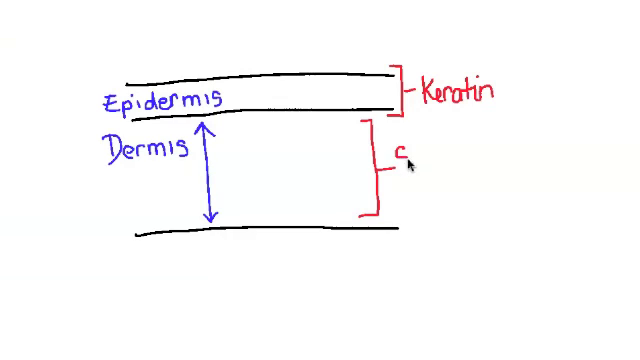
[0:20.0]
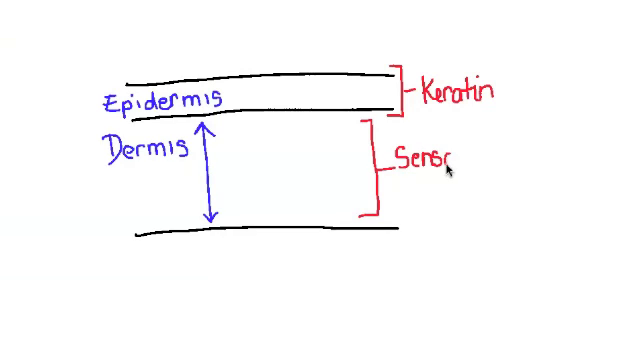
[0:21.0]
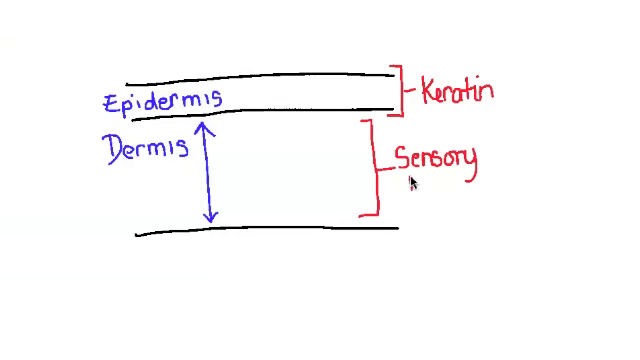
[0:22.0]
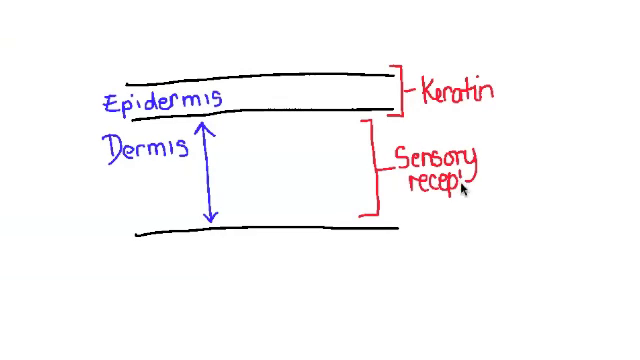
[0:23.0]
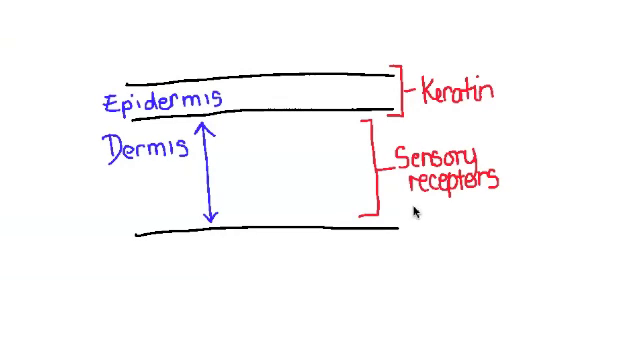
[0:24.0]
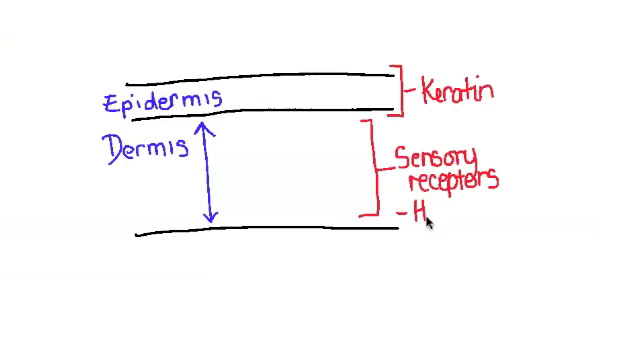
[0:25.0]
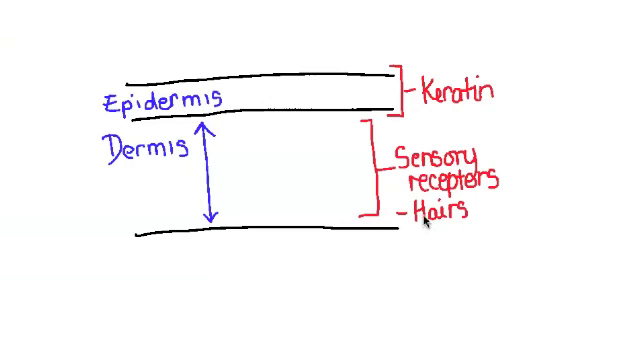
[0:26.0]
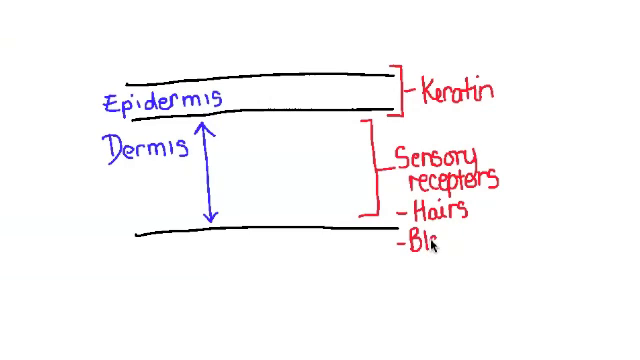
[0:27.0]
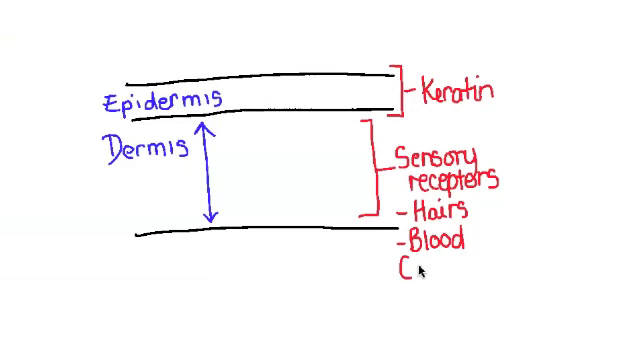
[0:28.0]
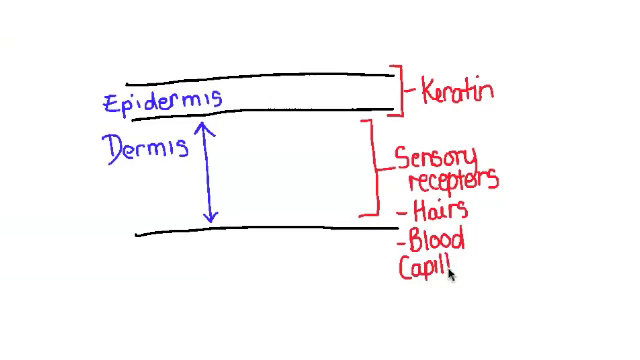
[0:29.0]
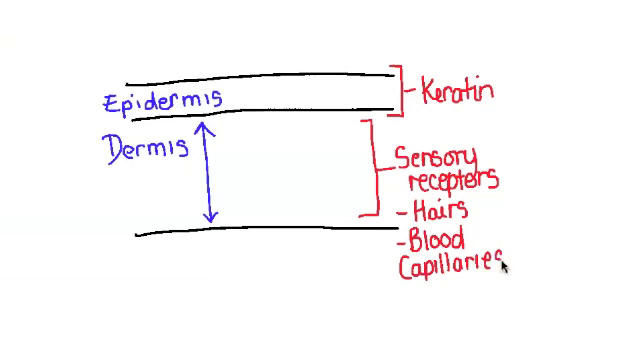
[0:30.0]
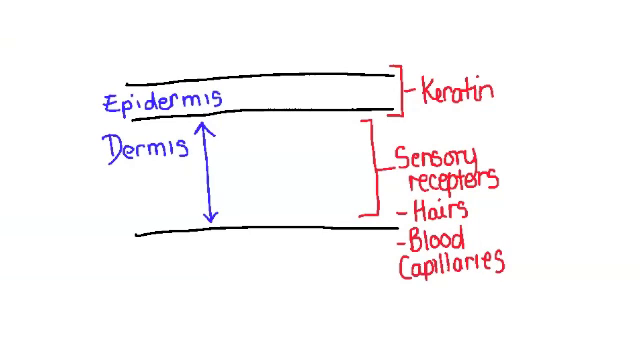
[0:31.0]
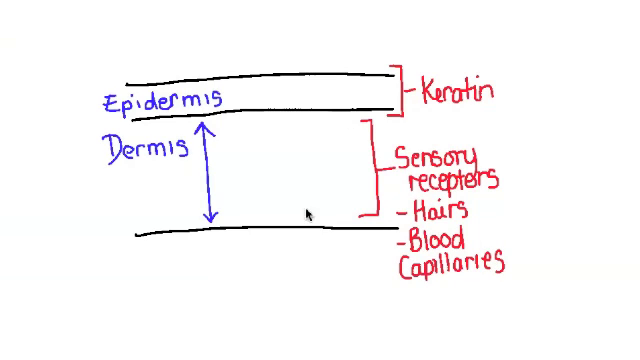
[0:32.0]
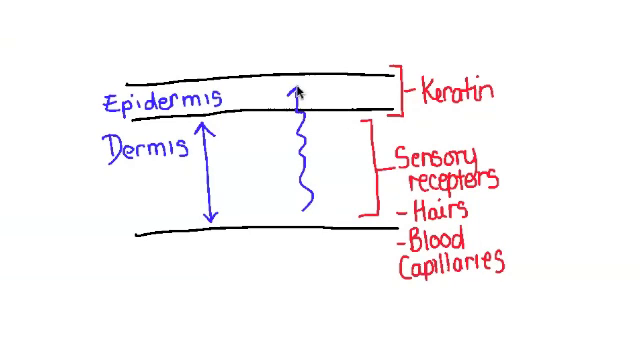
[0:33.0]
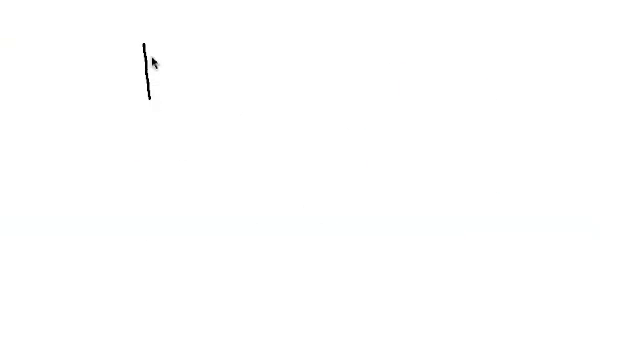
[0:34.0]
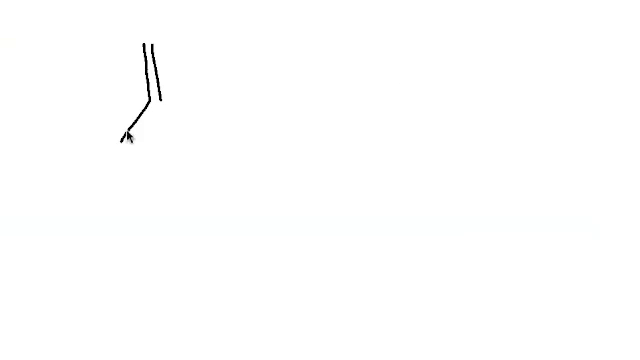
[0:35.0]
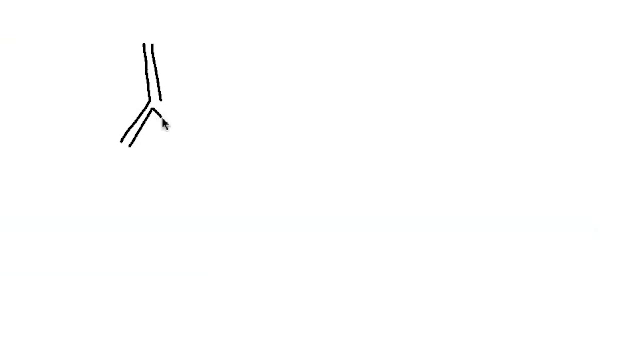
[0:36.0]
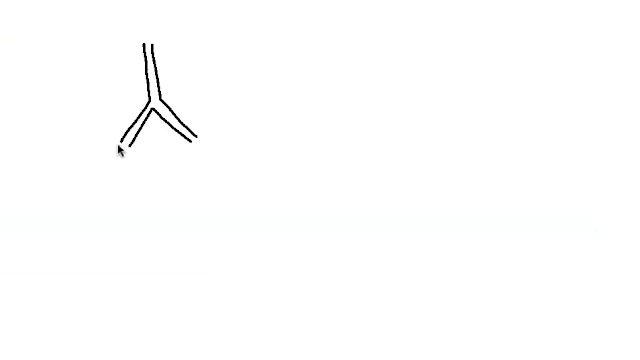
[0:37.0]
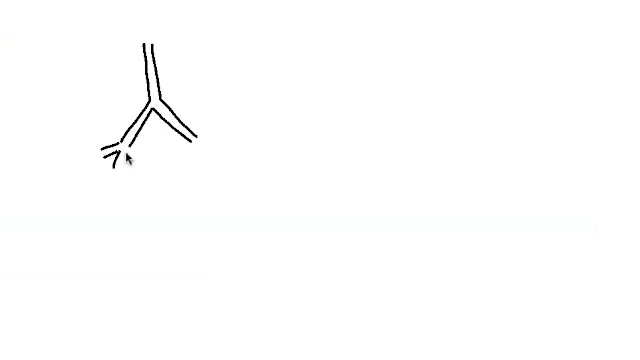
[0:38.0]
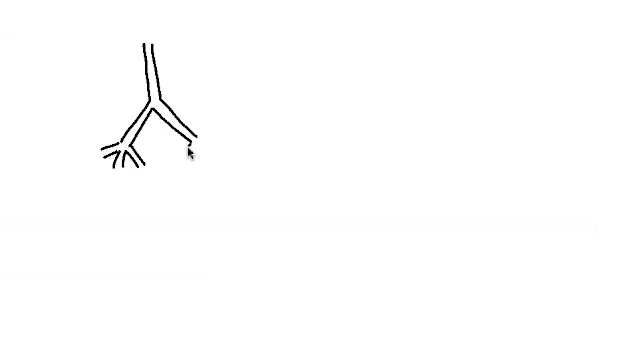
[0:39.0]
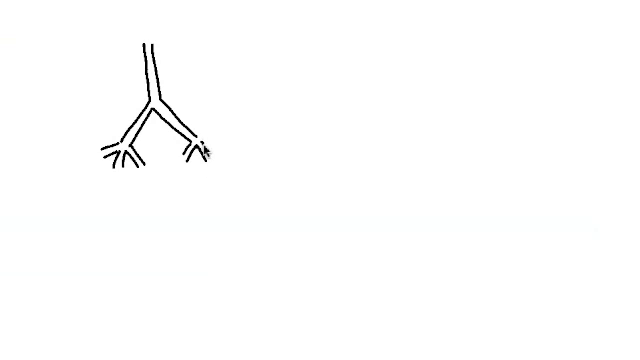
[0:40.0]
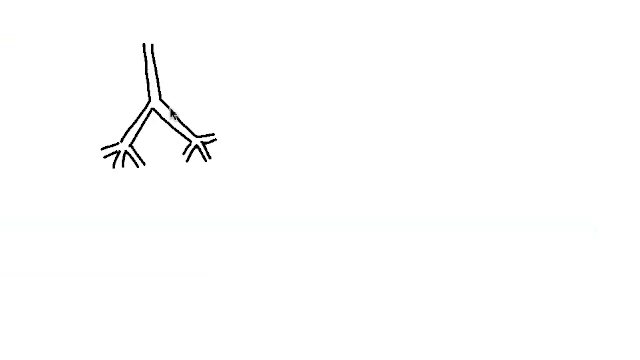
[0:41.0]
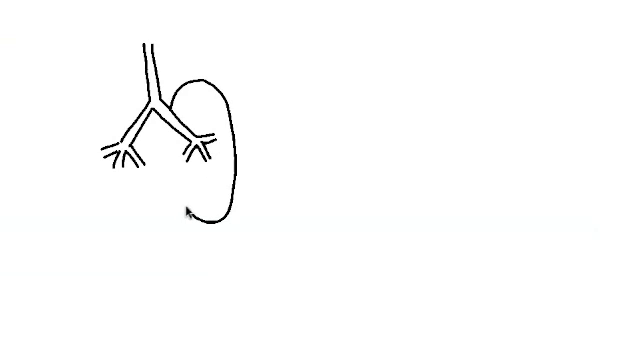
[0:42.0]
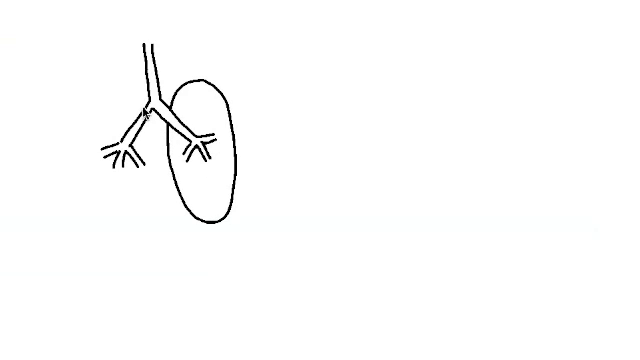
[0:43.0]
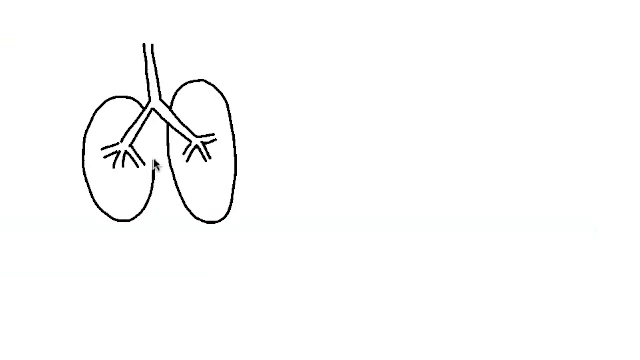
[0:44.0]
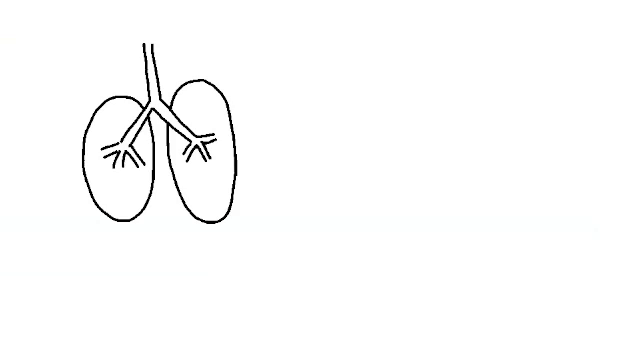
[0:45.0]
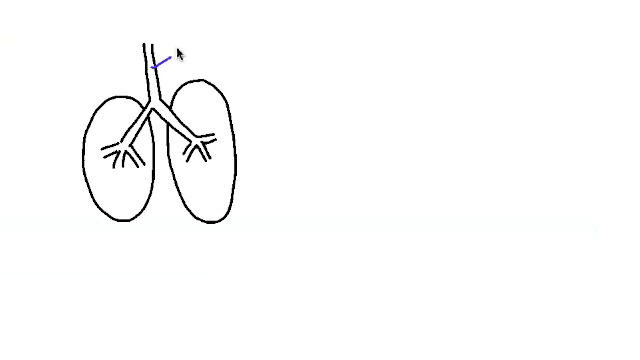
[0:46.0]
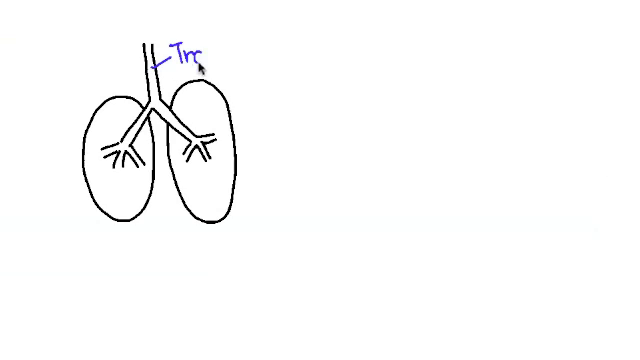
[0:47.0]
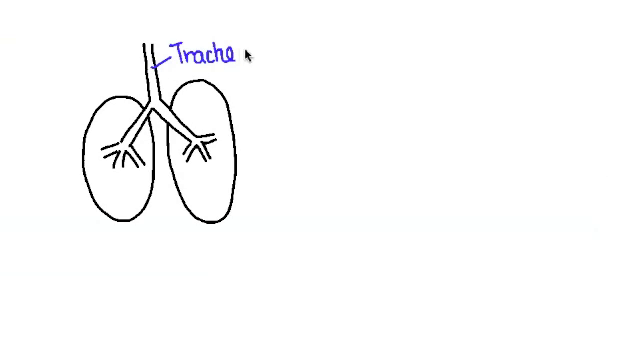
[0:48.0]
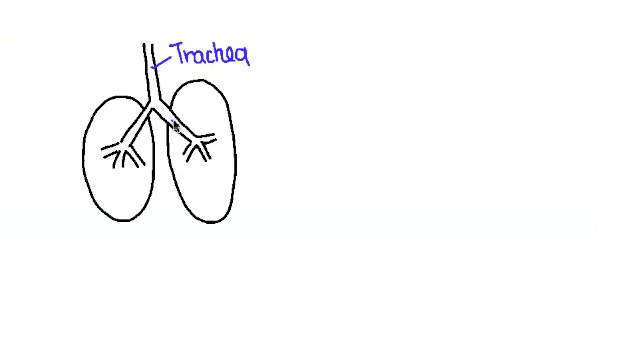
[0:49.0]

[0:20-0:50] To the right of the section labeled dermis in purple ink, "sensory receptors" is written, with "hairs" and "blood capillaries" listed underneath as bullet points or dashes. A squiggly line and arrow are then drawn all the way through the epidermis layer, pointing toward the very top border. On a new page, an upside-down Y shape is drawn in black ink, with tree branches extending from the bottom. An oval shape is drawn surrounding the two branches on the left and right, depicting a lung. A label is placed along the top stem reading "trachea" in purple ink, and "bronchioles" begins to be written in purple ink, labeling the branches off the trachea. The lung anatomy appears to be the subject now. The drawing is on the left side of the screen, while the right side is blank and white.